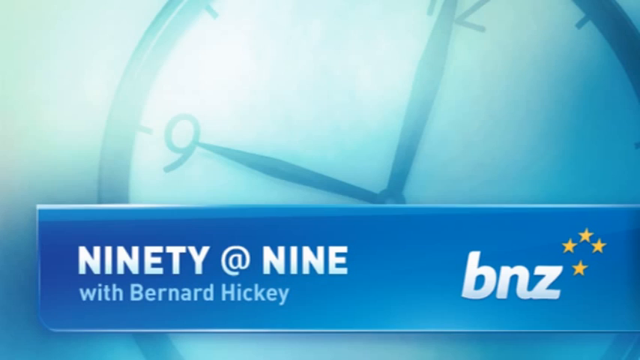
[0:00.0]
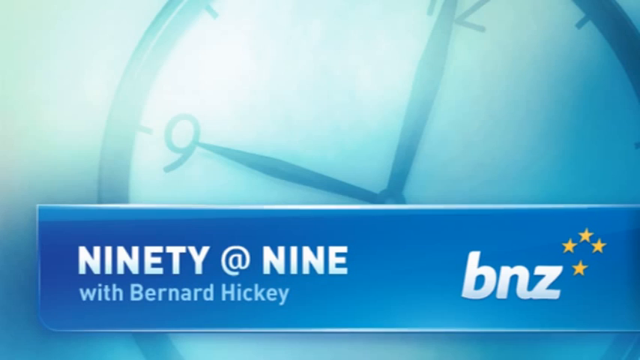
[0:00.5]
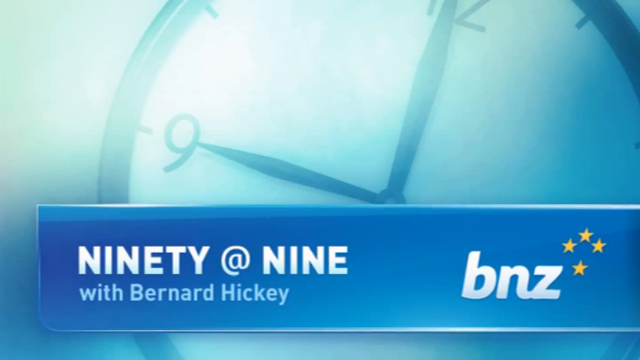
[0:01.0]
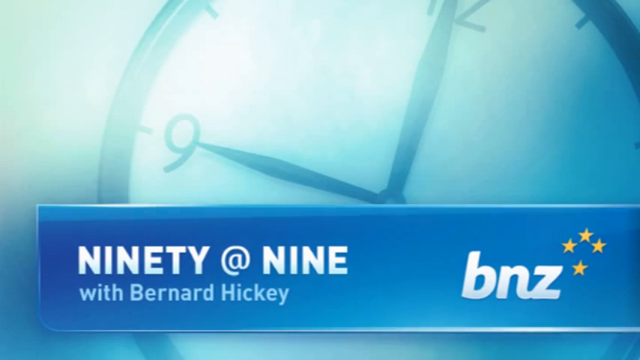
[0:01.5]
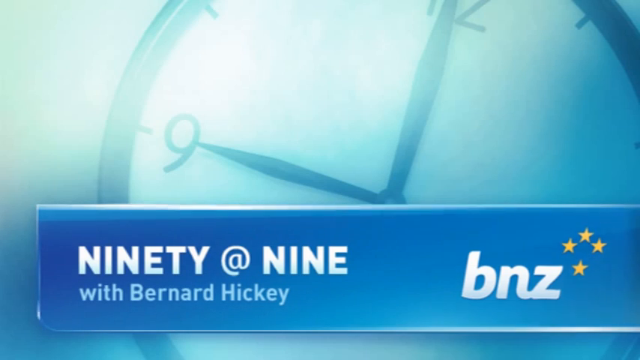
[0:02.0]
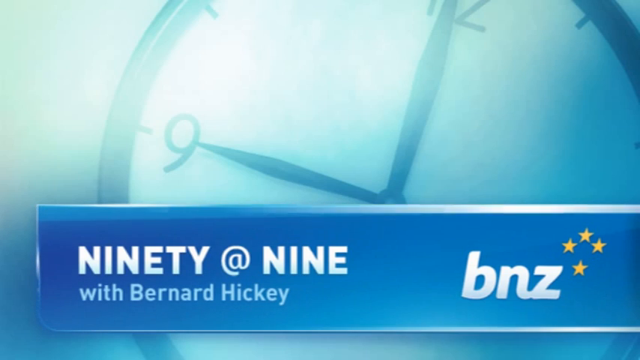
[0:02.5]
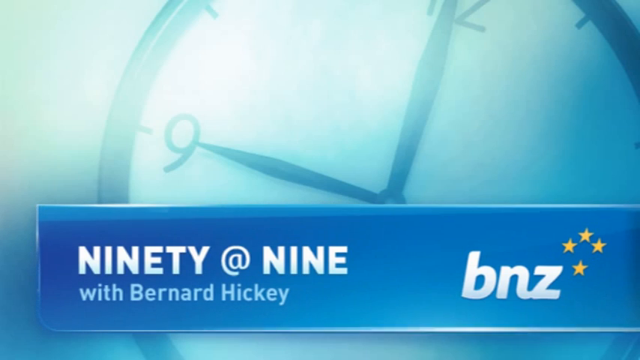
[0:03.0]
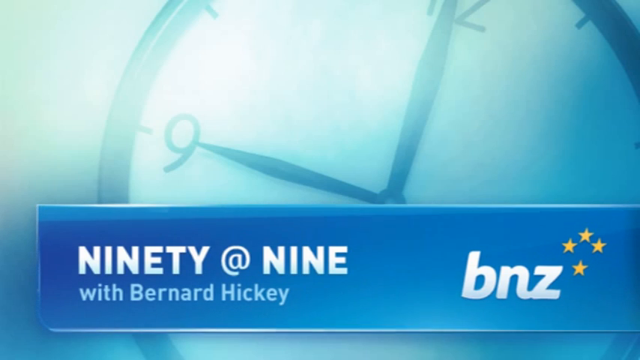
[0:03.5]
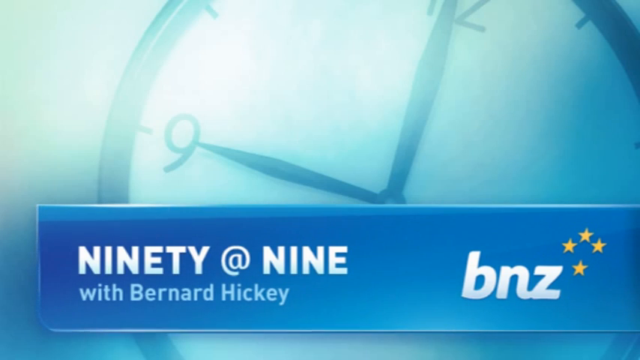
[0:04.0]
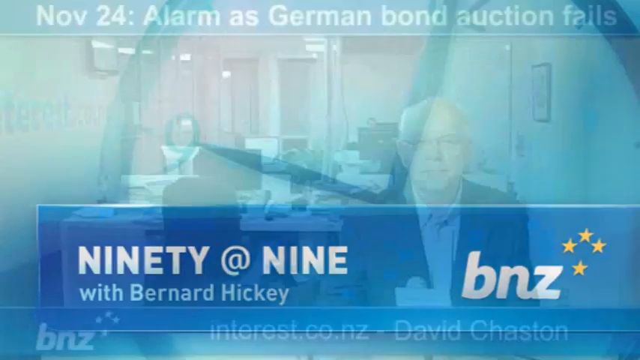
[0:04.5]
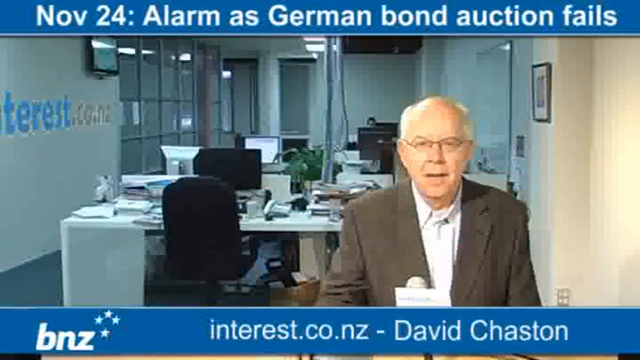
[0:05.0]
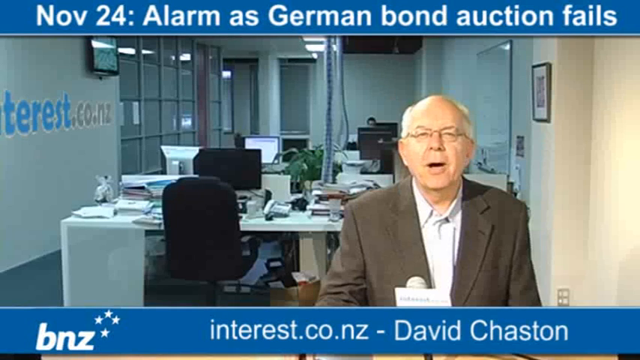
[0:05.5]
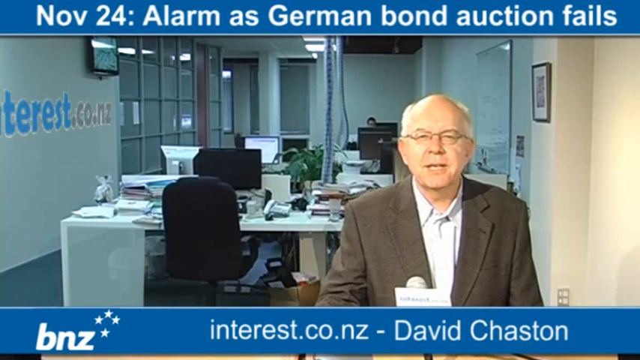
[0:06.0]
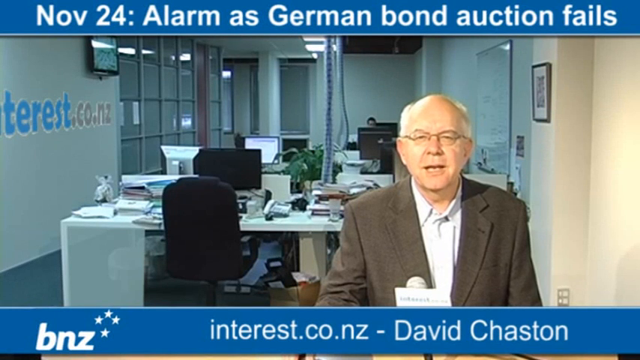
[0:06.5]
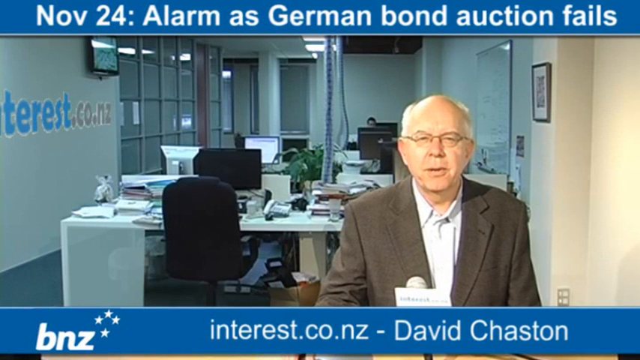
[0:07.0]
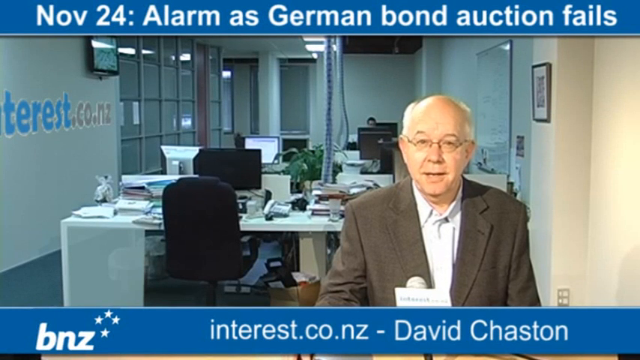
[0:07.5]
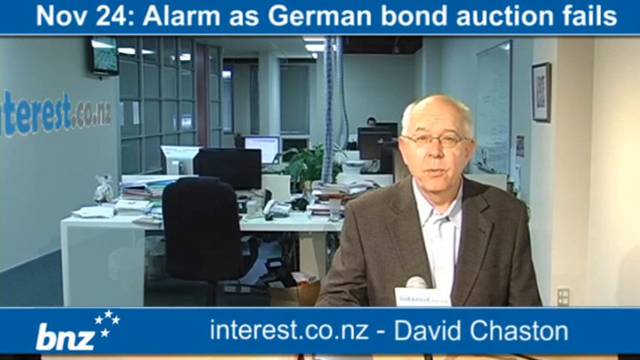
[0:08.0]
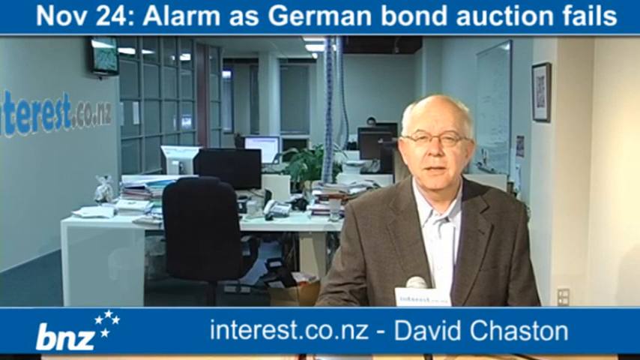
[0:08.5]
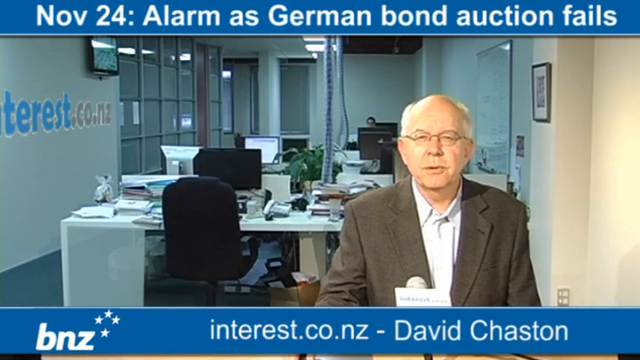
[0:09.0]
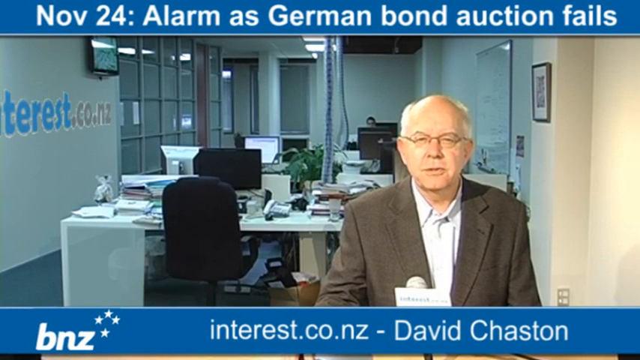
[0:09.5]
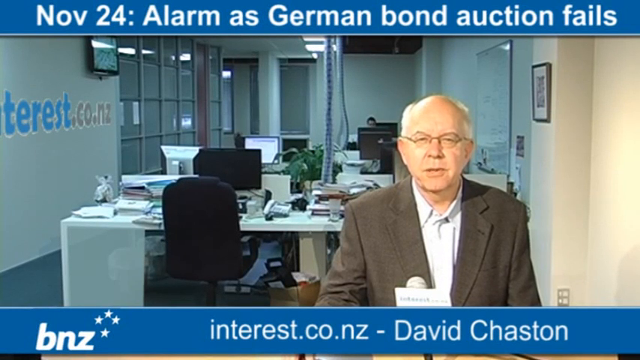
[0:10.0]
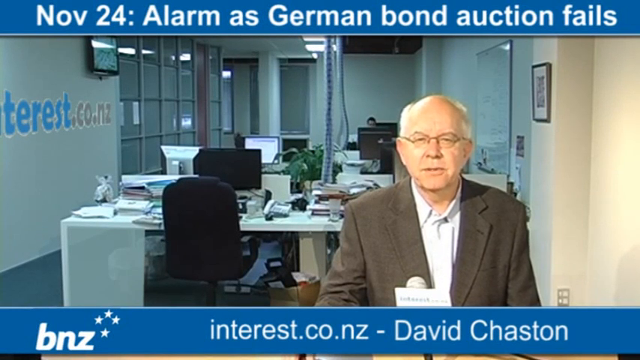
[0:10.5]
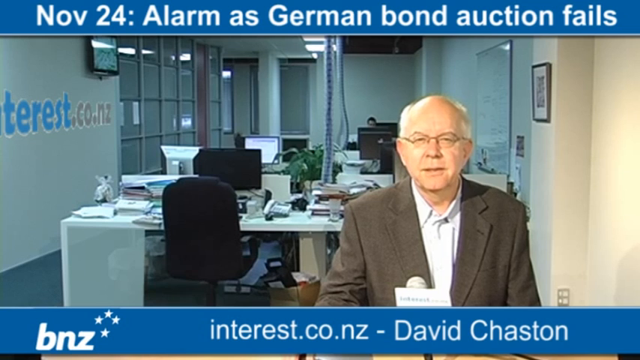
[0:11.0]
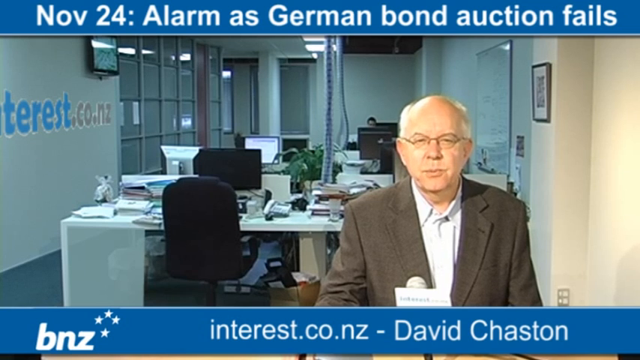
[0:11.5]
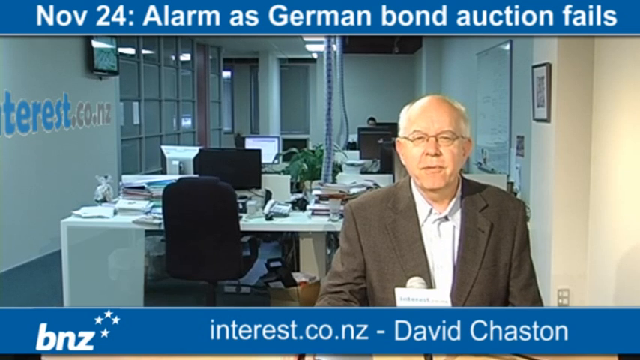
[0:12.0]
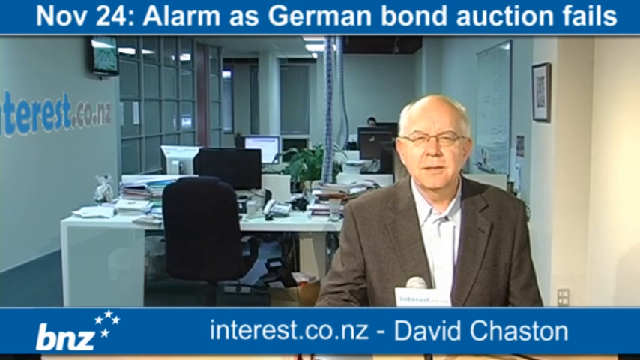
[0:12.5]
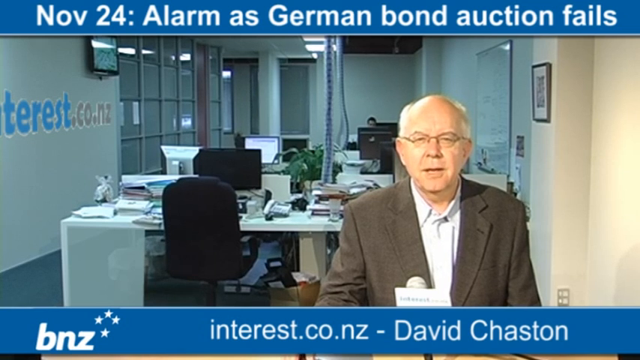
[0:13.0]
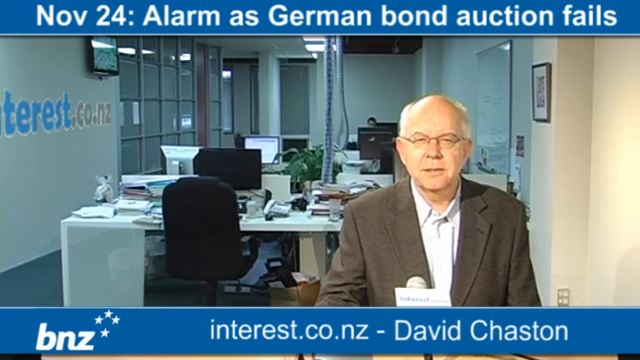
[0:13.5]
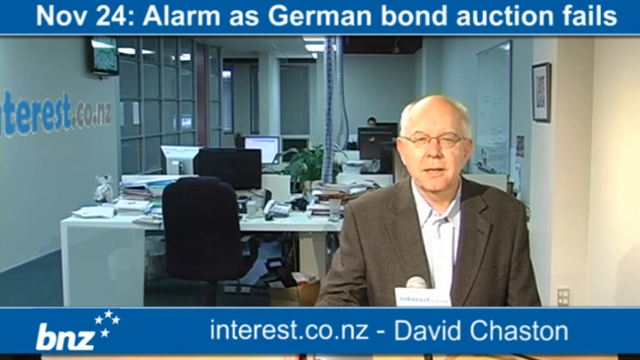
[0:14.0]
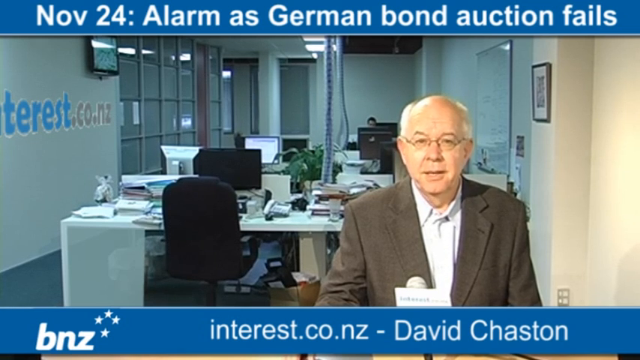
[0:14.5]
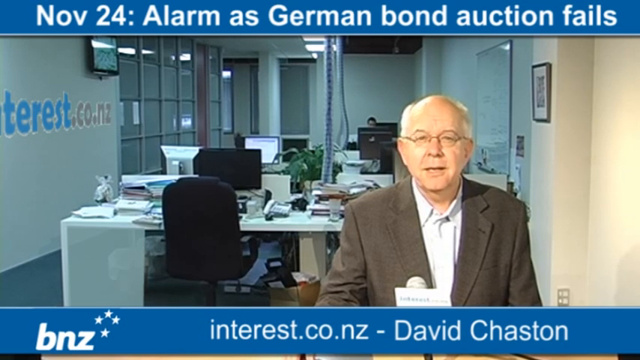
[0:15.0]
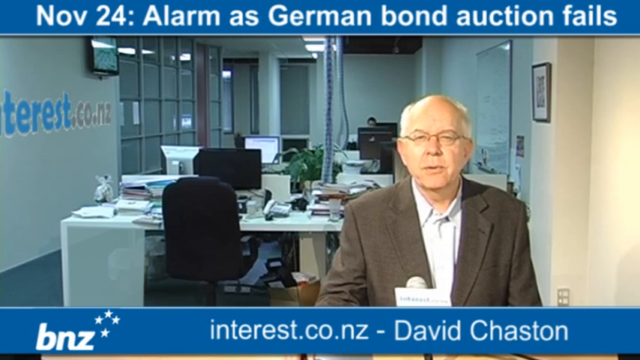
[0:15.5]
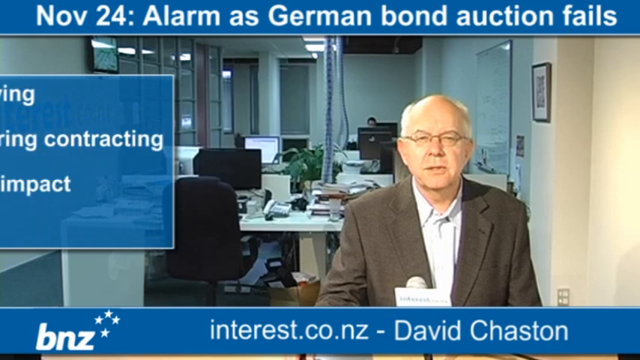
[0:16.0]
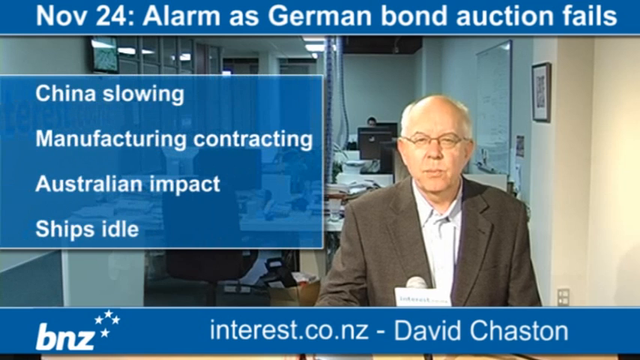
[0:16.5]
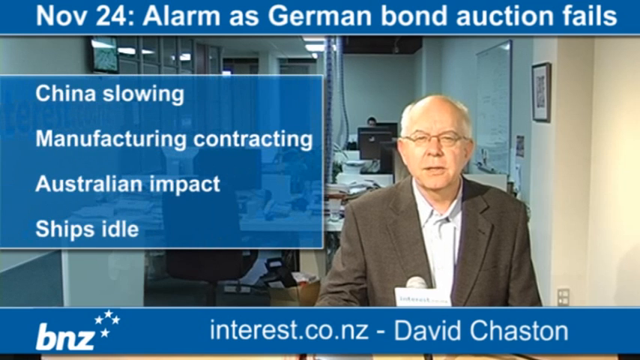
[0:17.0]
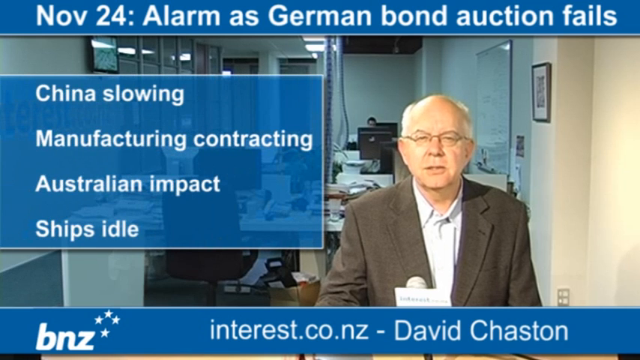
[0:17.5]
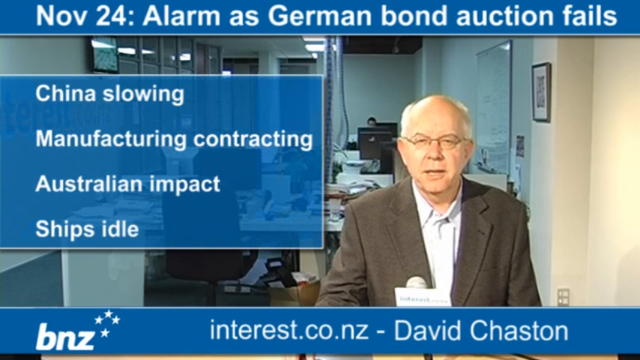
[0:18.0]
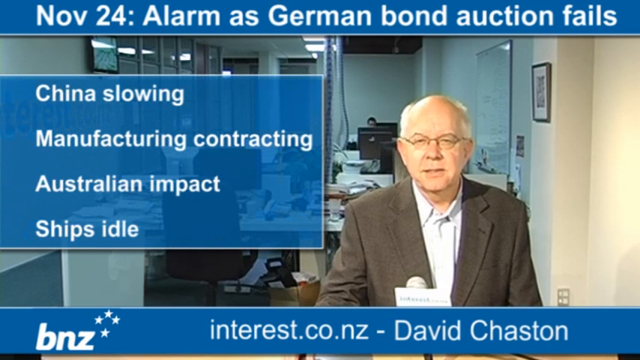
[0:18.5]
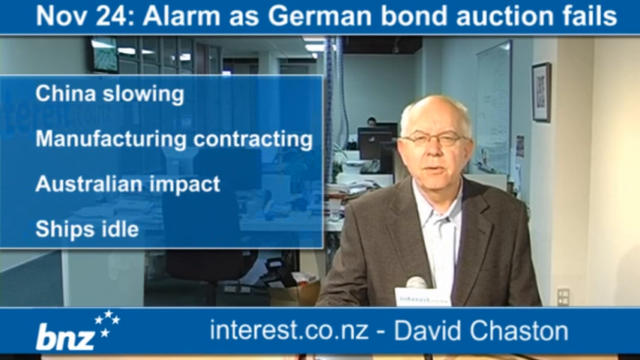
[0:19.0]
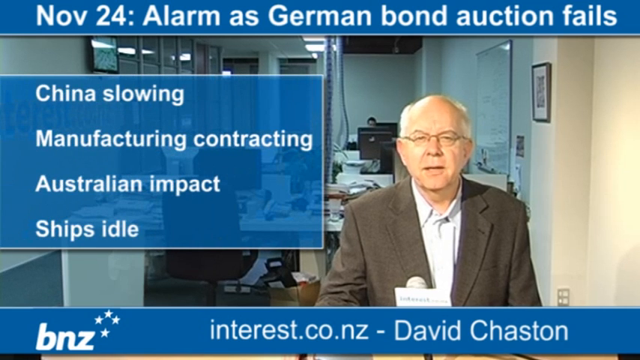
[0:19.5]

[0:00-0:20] The video opens with "90 at 9 with Bernard Hickey BNZ." A man with white hair and glasses is in a room; the video is from New Zealand. On-screen text reads "China slowing, manufacturing contracting" and "Australia impact, ships idle," and at the top a line reads "November 21st" and "German bond auction fails." The man wears a brown jacket and a white shirt with no tie, and he speaks in front of a microphone. Behind him are desks with people sitting at them. The colours on screen are black and blue. The man's name is David Chaston, and the video is for interest.no.nz, which looks like a website.